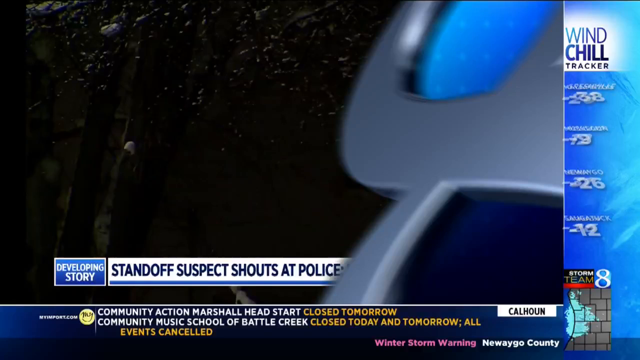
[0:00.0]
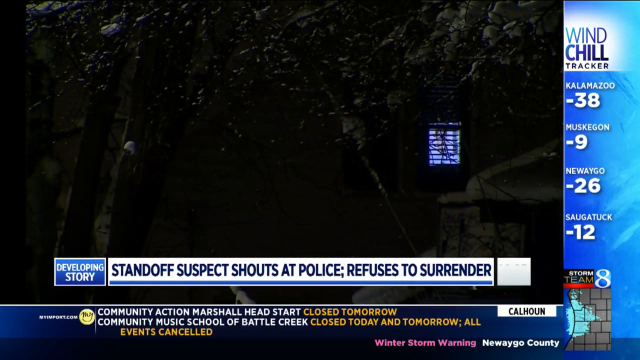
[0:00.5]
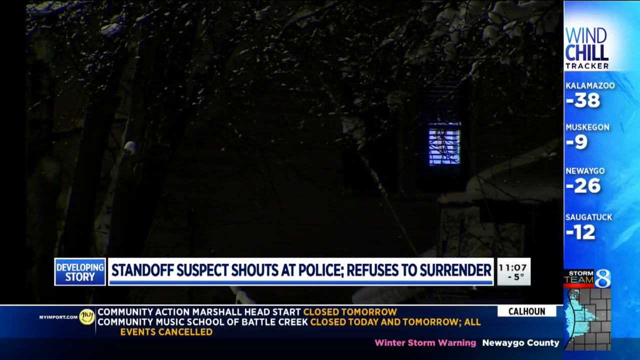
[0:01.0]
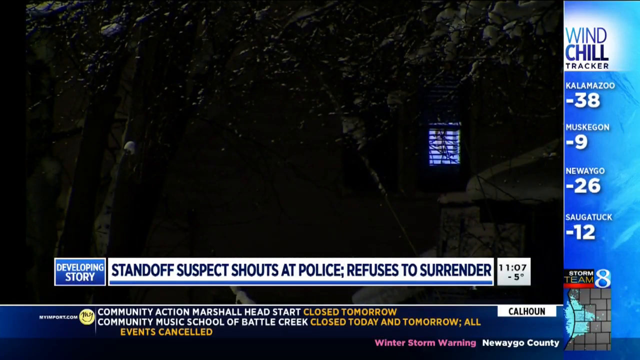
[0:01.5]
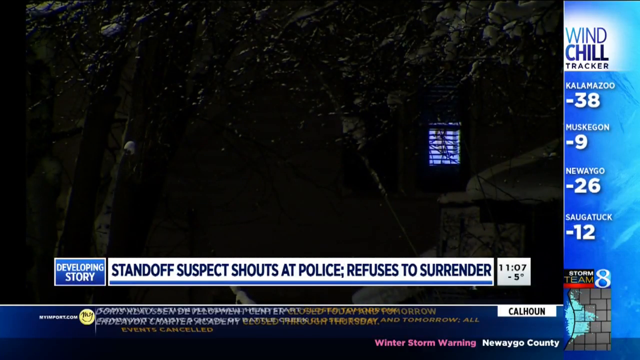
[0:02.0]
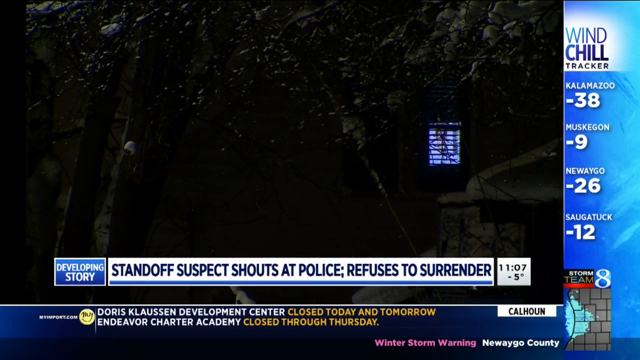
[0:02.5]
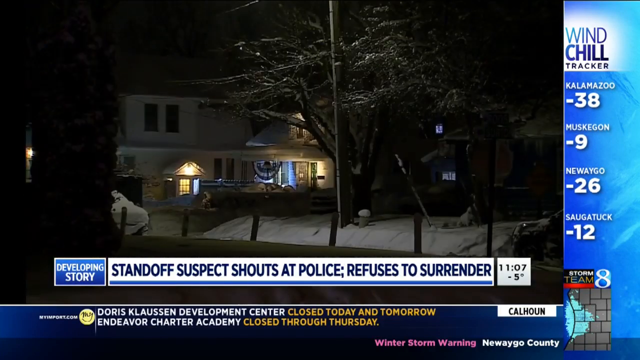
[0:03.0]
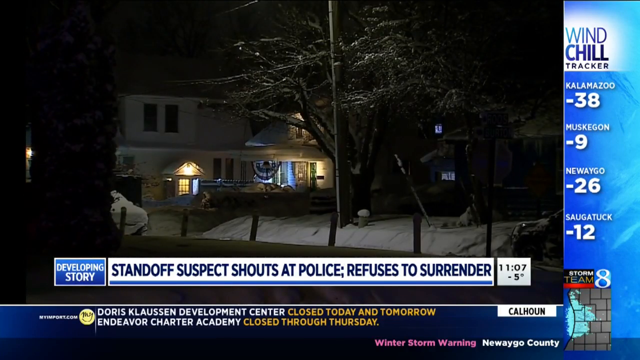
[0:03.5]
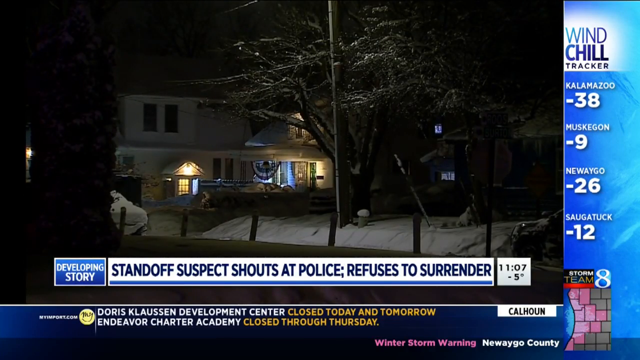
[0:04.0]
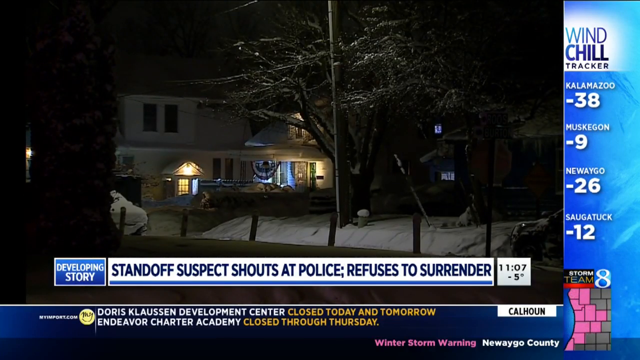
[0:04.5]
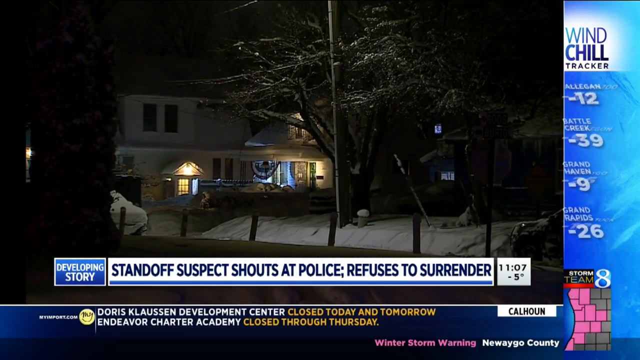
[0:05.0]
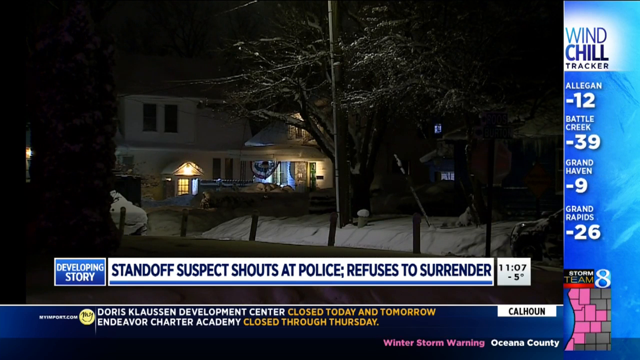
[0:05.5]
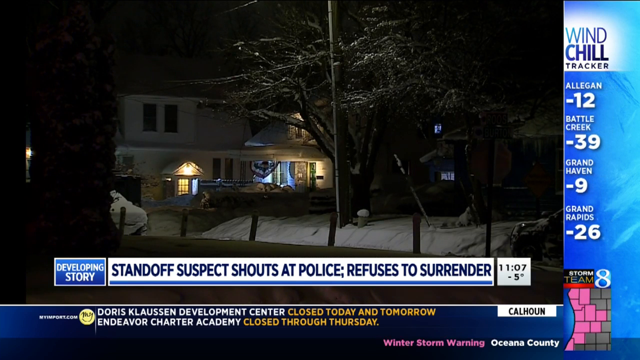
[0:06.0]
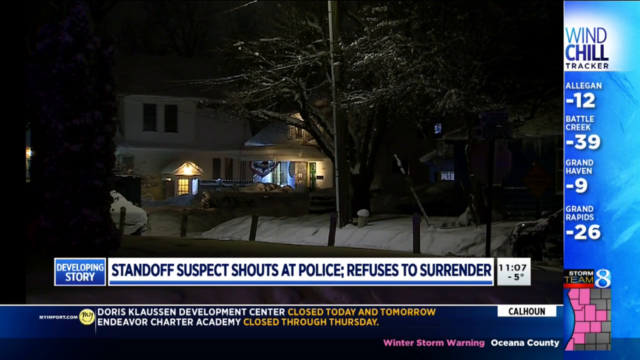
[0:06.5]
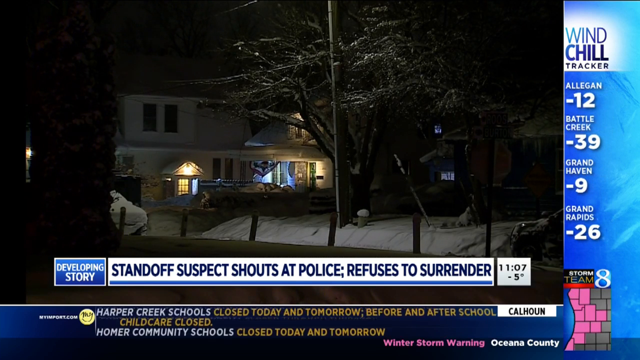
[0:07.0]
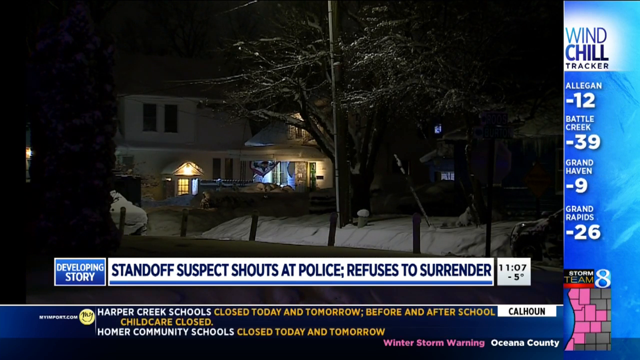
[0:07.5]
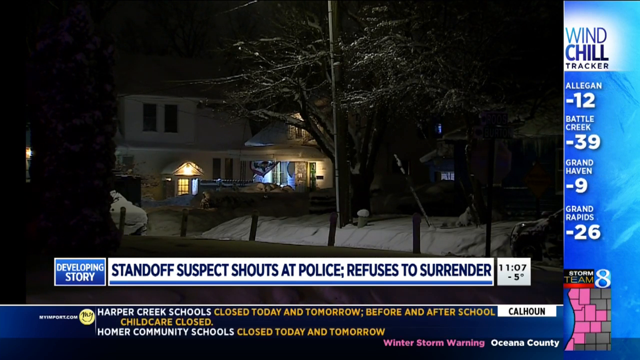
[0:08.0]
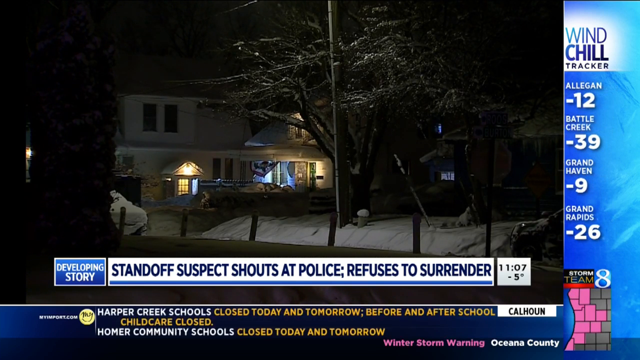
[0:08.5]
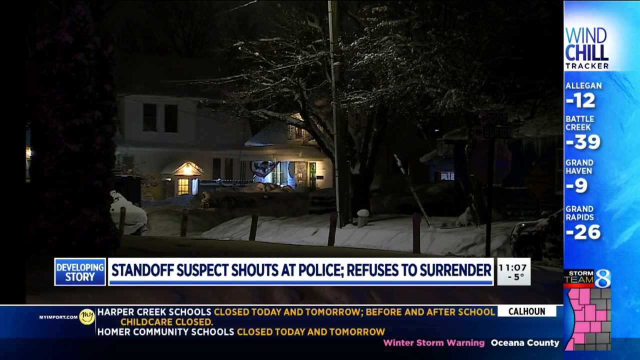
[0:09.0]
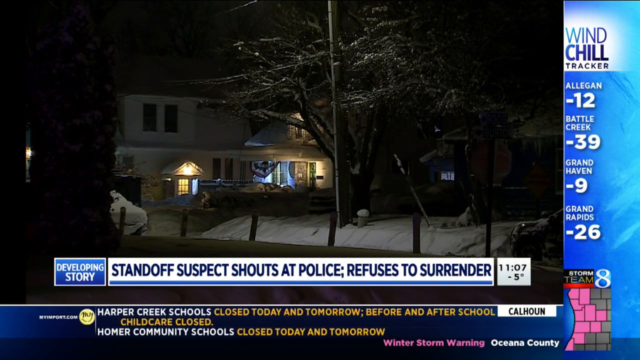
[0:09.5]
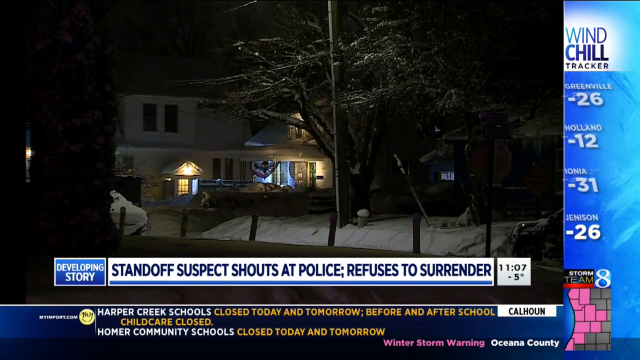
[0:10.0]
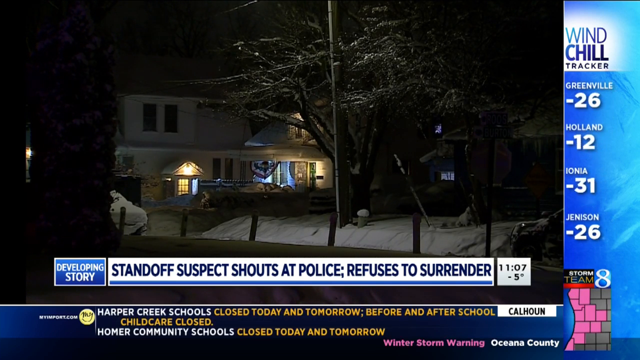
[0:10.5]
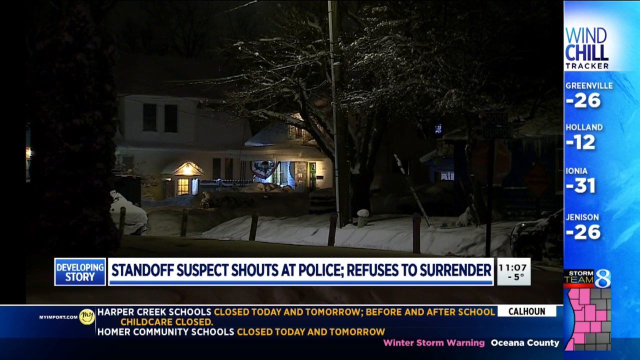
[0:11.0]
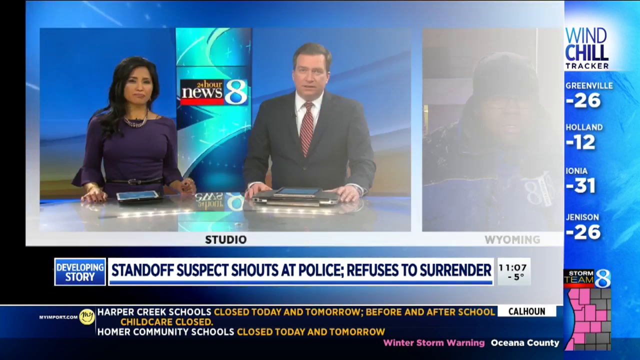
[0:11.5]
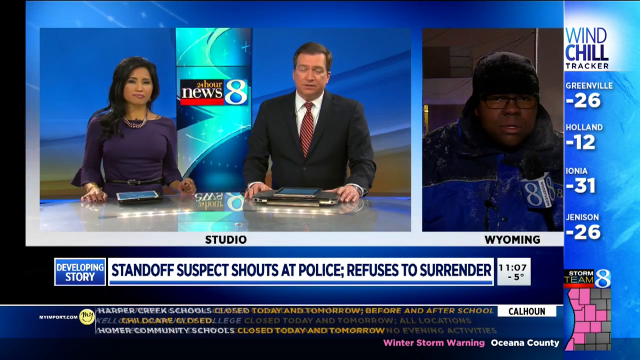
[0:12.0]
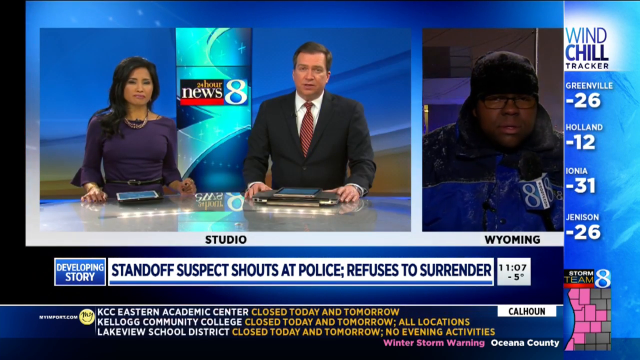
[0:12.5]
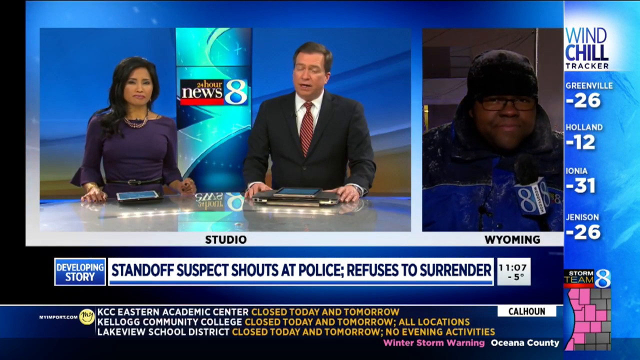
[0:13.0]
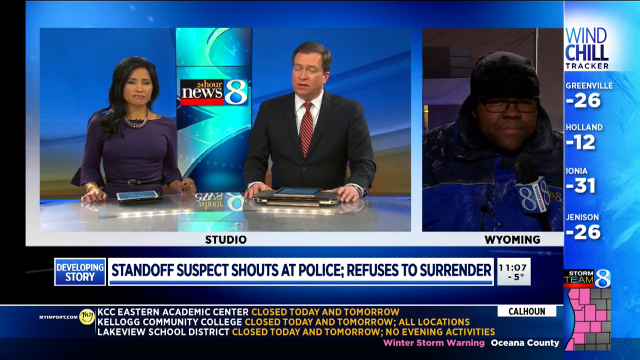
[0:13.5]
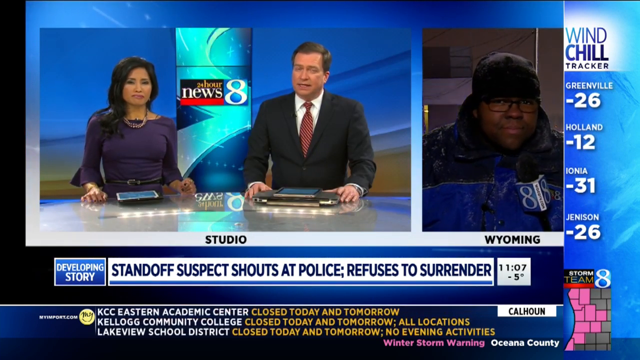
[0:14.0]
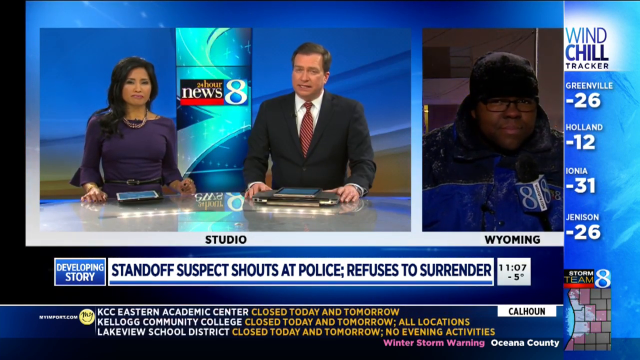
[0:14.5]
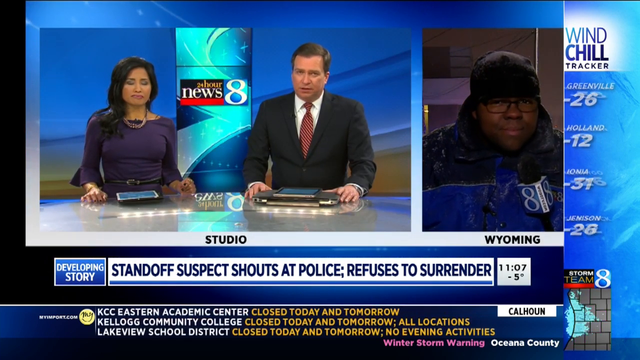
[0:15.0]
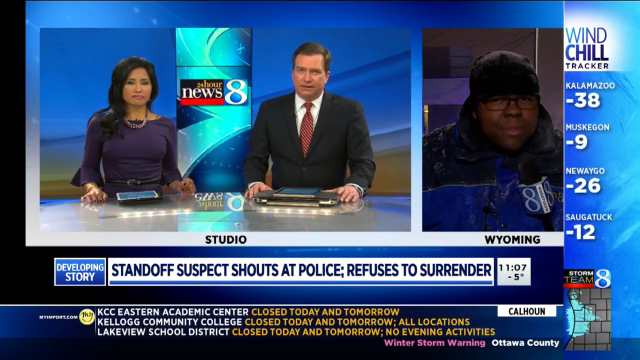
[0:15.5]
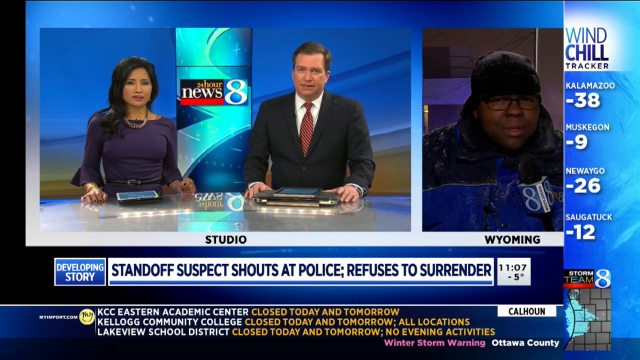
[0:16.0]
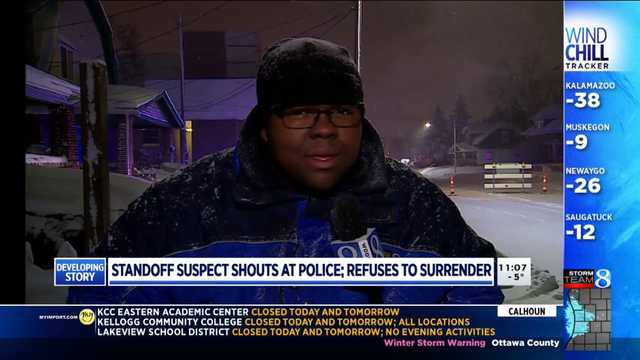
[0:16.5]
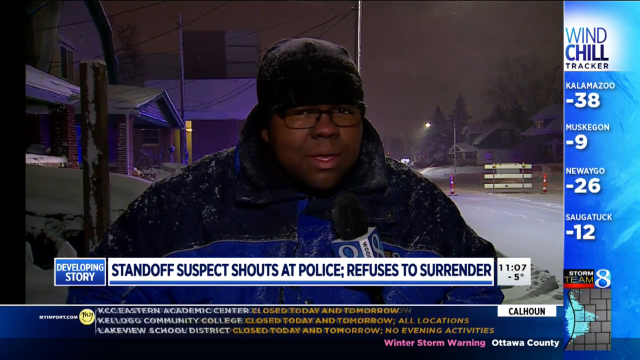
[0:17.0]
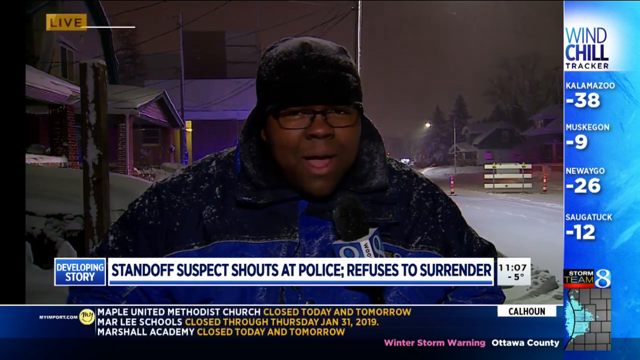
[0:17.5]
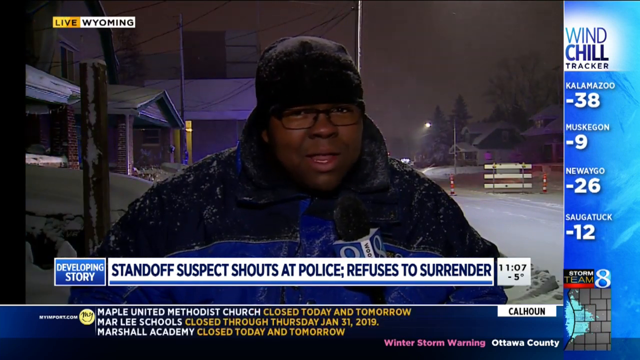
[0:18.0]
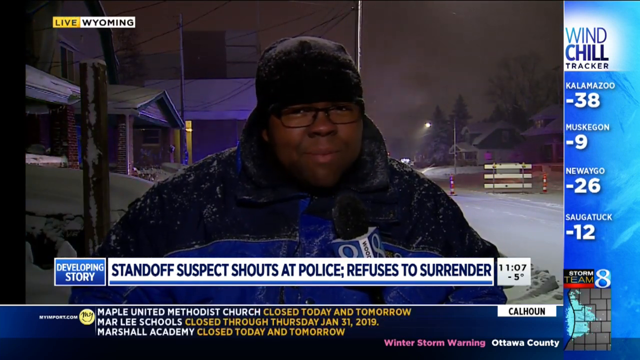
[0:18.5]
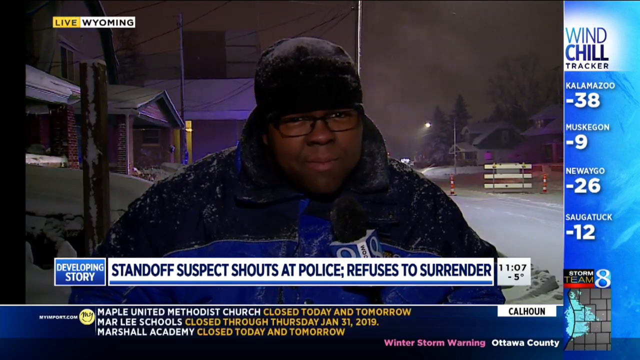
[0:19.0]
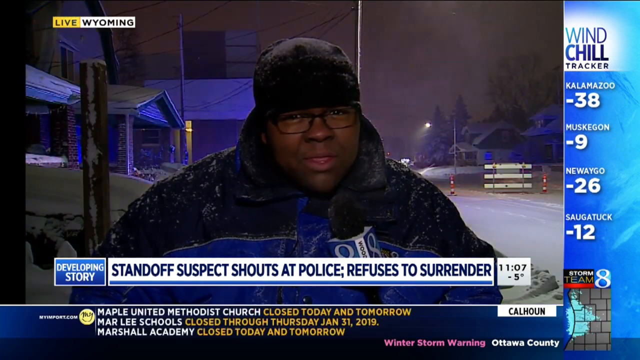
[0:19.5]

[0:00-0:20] A news broadcast shows a headline on screen reading "Development story" and "standoff suspect shouts that police refuses to surrender." On the right side of the screen is a wind chill tracker, apparently for Michigan, listing Kalamazoo at minus 38, Muskegon at minus 9, New Wago at minus 26 and Saugatuck at minus 12. In the bottom right corner there is a small map of Michigan with "Storm Team" on top of it. Other news at the bottom of the screen reports the Doris Coffin Development Center being closed, and the temperature on screen reads five degrees below zero. The footage shows the outside of a nice-looking home at night, with snow on the ground and a tree in the front yard. A light is on, looking like a living room or porch light visible from outside. After a few seconds the video cuts to a split screen with two anchors on the left and a correspondent on the right. The anchors, a man and a woman, appear to be middle-aged and are sitting at a table. The male anchor, maybe in his fifties, has dark hair and wears a black blazer, white shirt and red tie. The female anchor, maybe in her late forties, wears a dark purple blouse and a necklace. Behind them is "news eight" with a lot of blue in the background. The correspondent, apparently a man, is African-American, maybe in his late thirties or early forties, and wears a winter cap, a very thick coat and glasses; he holds a microphone marked "8." The screen also shows "Wyoming" and information about churches and schools that will be closed due to the weather.